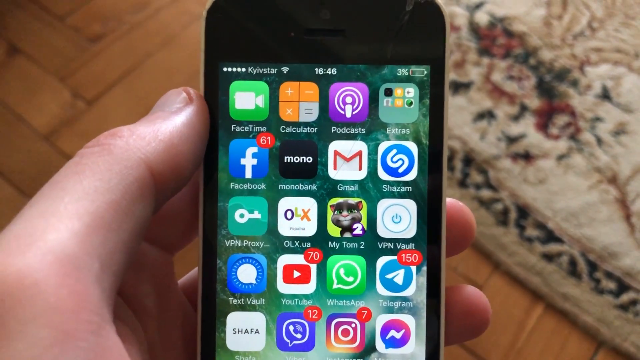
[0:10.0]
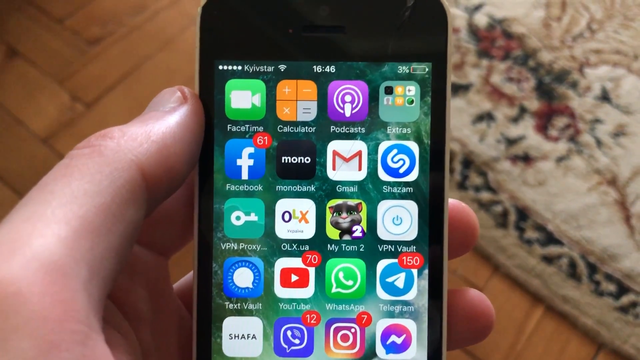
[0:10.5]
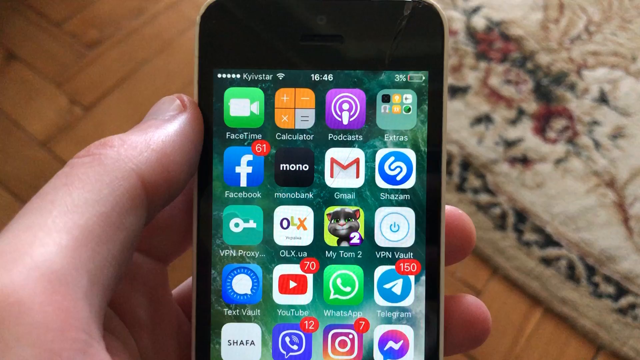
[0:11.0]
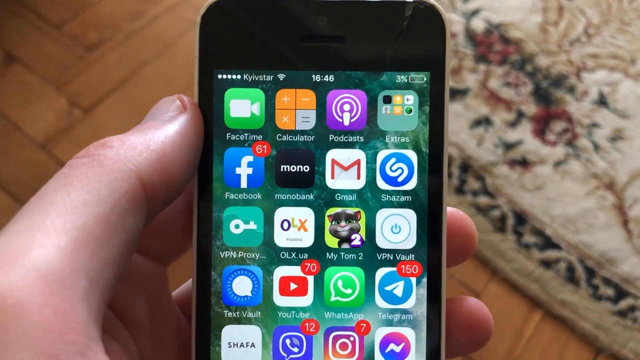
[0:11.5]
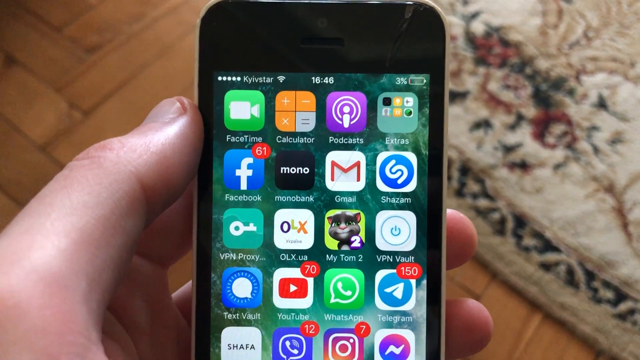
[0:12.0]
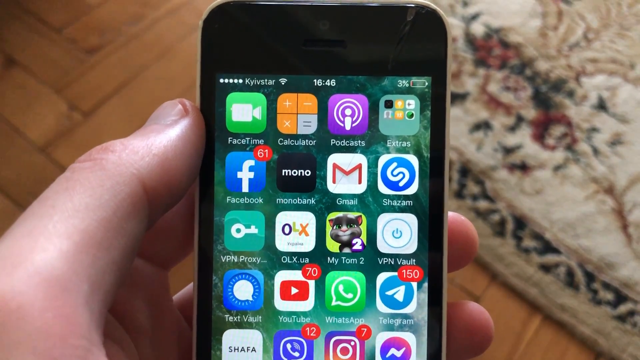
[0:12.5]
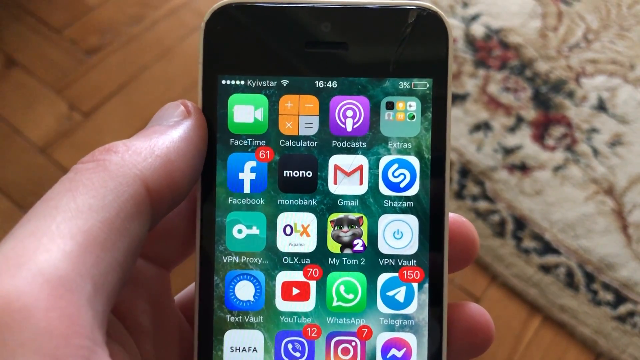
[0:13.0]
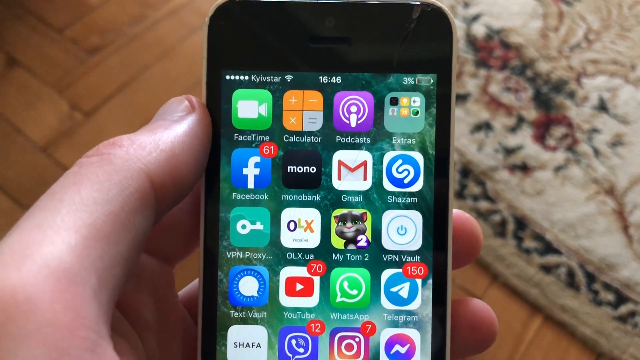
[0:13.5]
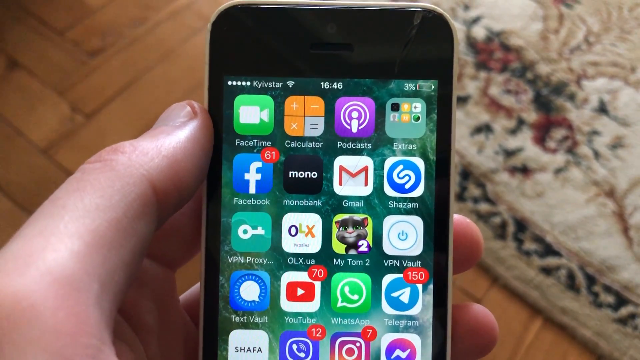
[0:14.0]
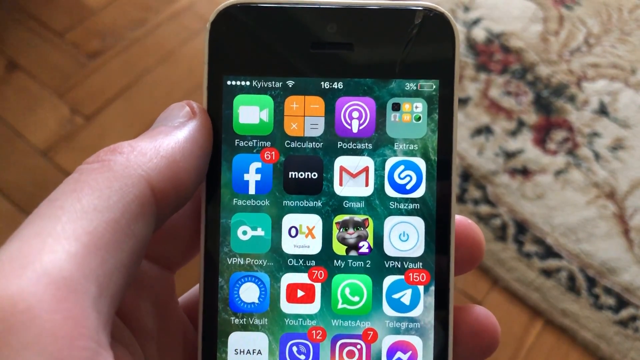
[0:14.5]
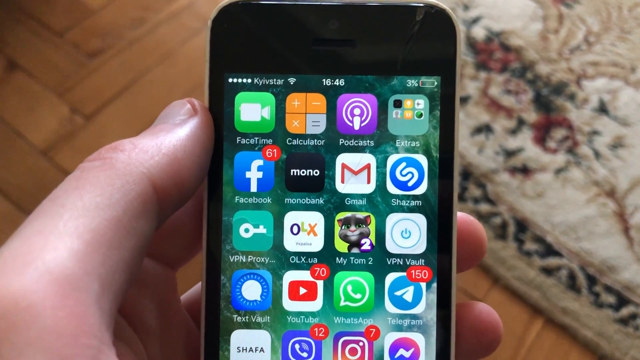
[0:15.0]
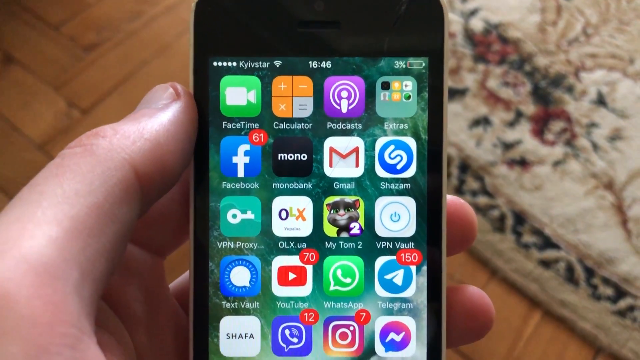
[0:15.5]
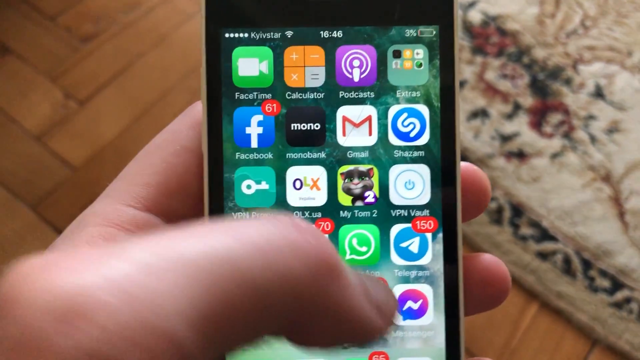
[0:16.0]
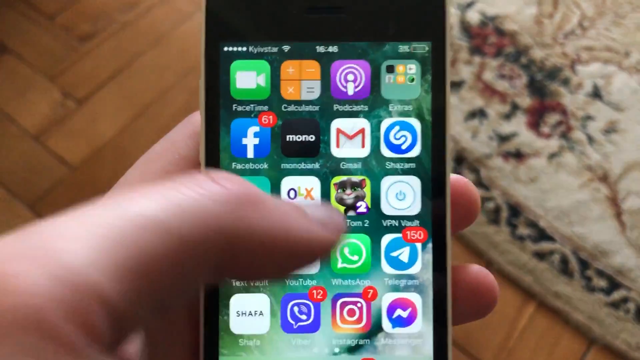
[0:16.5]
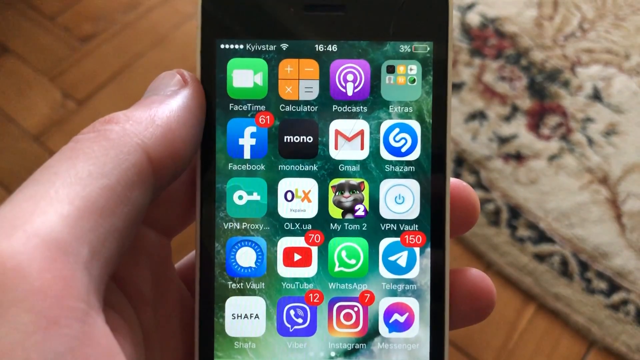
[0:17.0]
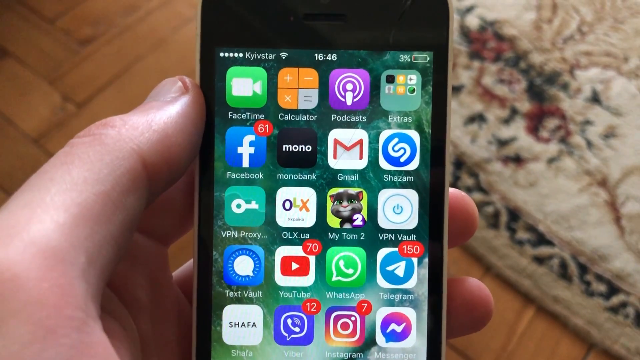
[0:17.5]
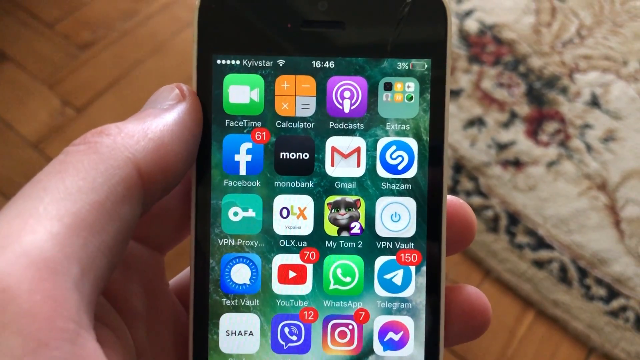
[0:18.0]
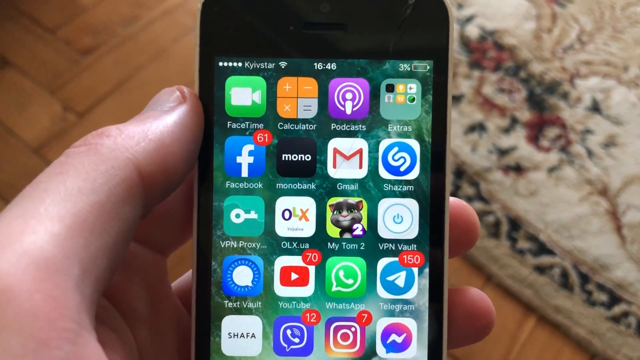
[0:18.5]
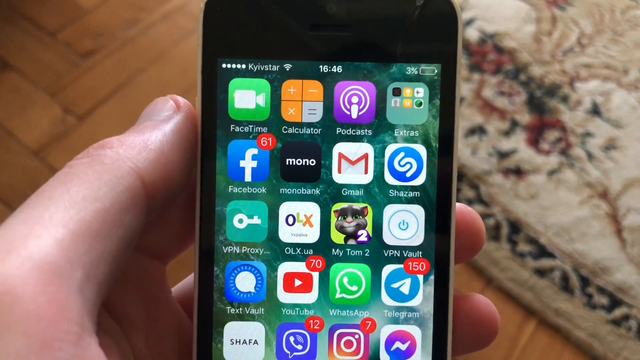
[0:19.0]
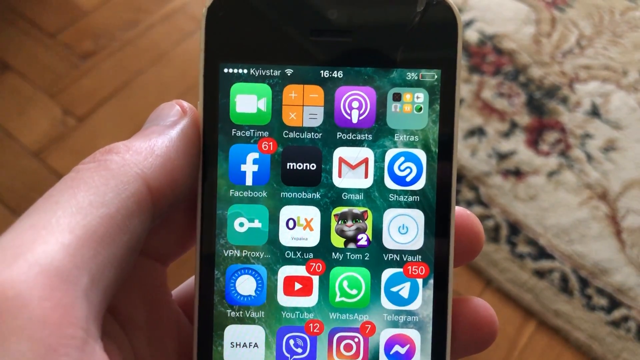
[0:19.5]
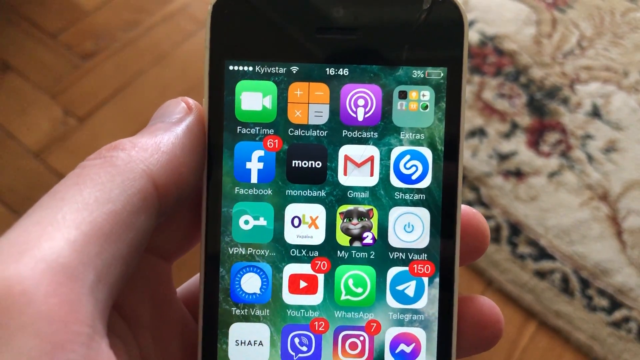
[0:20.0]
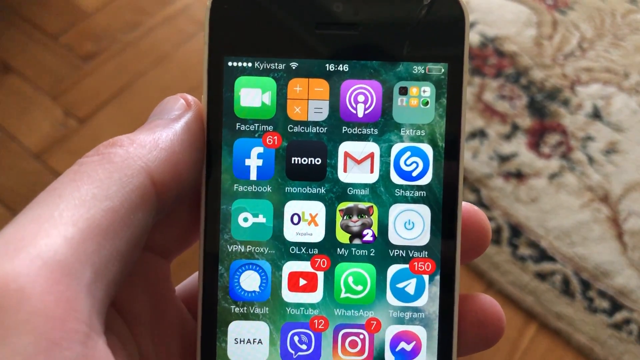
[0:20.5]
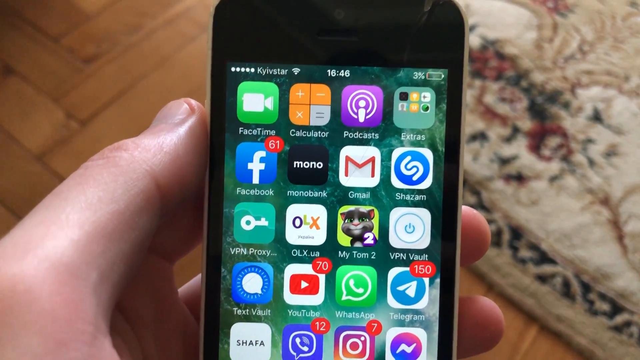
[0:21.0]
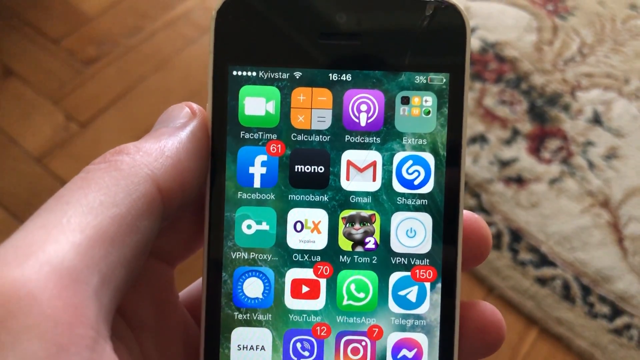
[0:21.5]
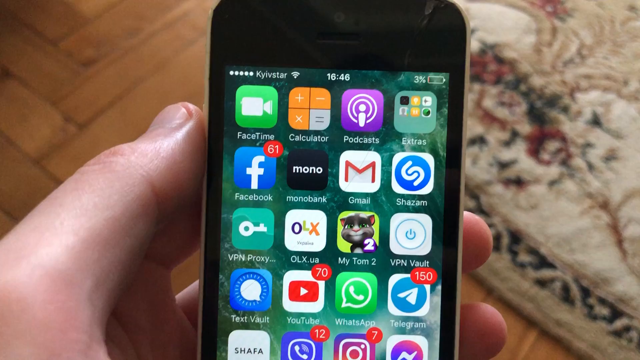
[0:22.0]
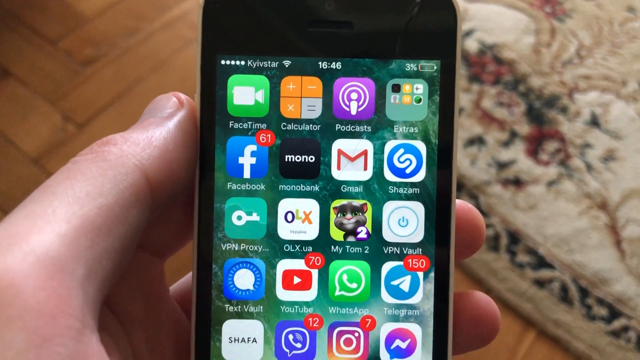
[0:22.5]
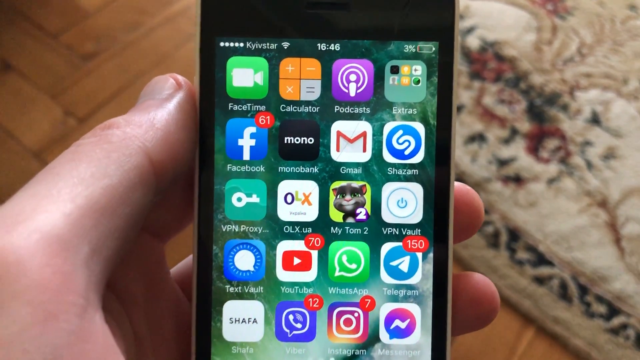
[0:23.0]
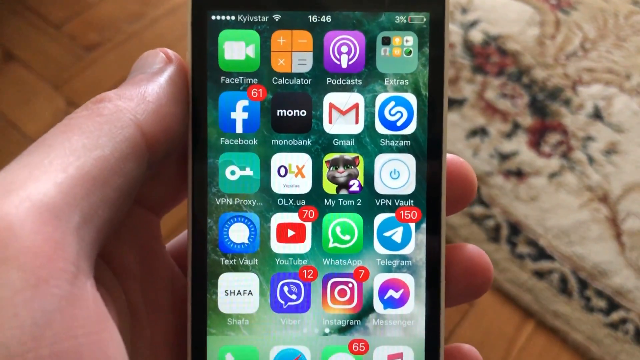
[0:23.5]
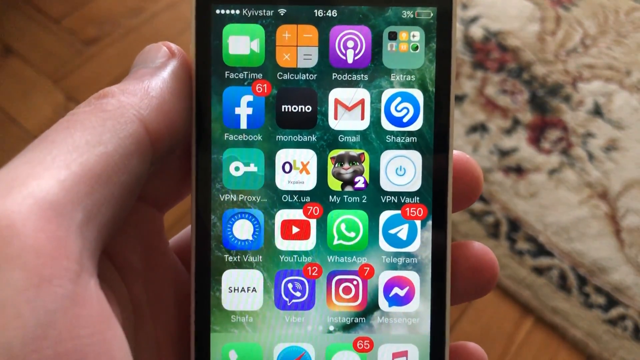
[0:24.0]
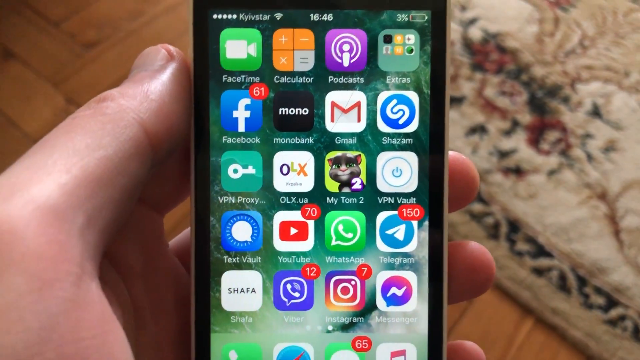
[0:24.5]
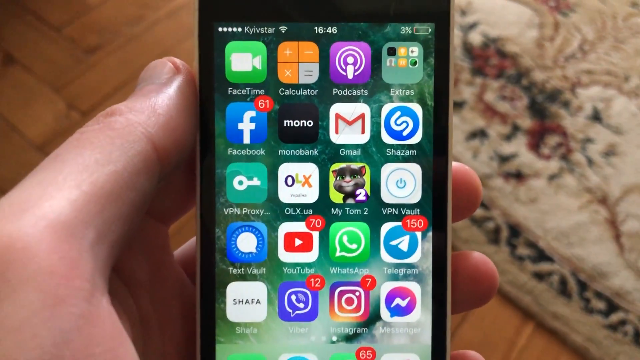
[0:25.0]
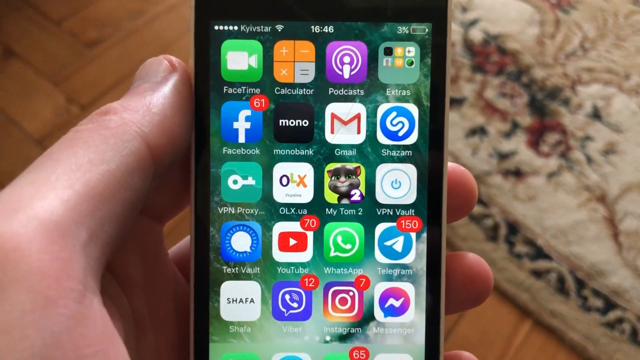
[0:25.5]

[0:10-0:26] Someone is recording the face of an iPhone held in their hand. In the background, they appear to be standing in the living room or maybe the kitchen of a home, with a throw rug on a wooden floor. Several familiar apps are on the iPhone screen. FaceTime is in the top left, and across the top row are Calculator, Podcasts and a folder named "Extras." Below that is the Facebook app with 61 notices, followed by Monobank, Gmail, Shazam and an app that says "VPN Proxy." Next come OLX.ua, My Tom 2, VPN Vault, TextVault, YouTube with 70 notices, WhatsApp, and Telegram with 150 notices.